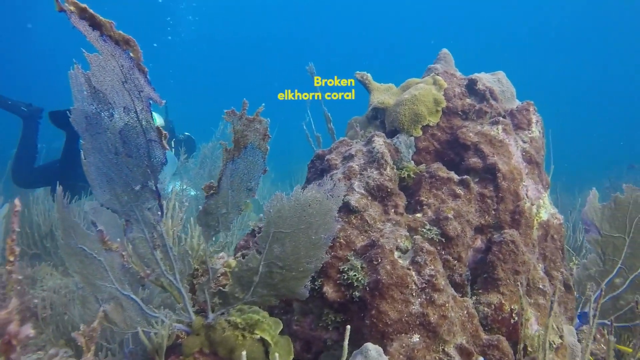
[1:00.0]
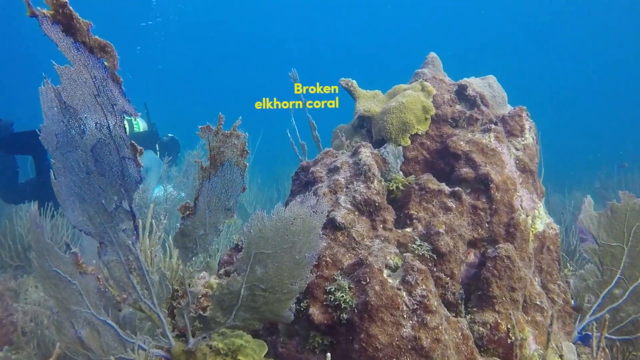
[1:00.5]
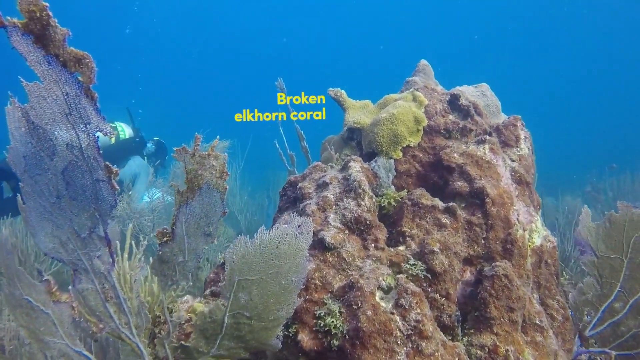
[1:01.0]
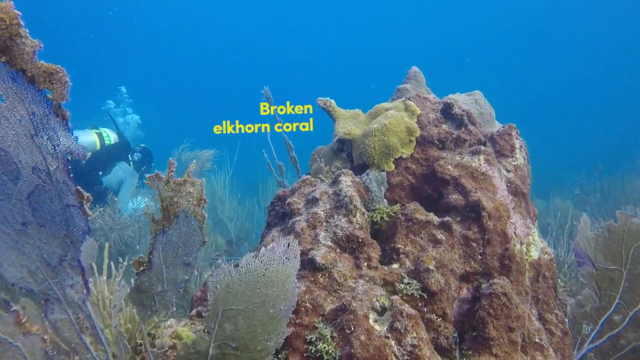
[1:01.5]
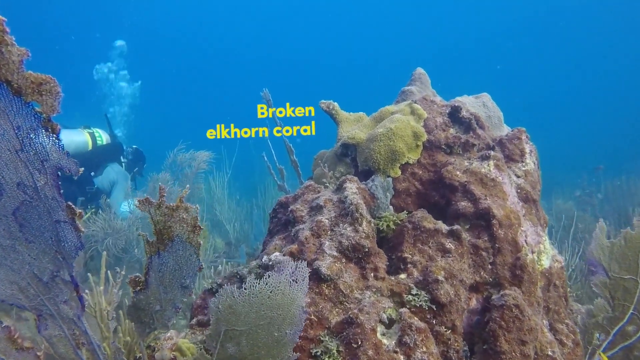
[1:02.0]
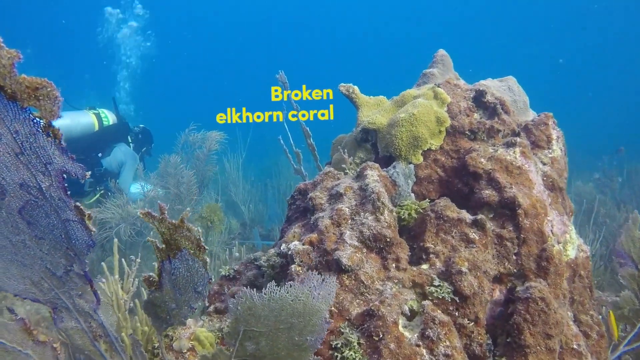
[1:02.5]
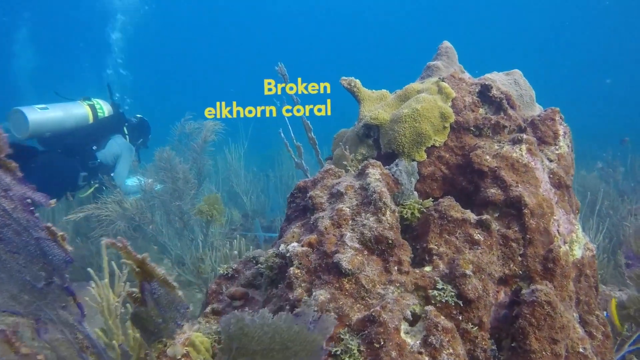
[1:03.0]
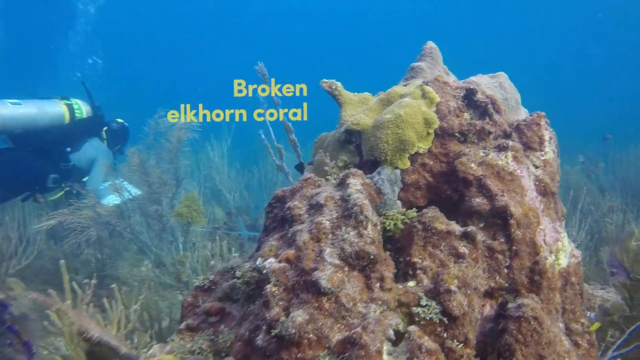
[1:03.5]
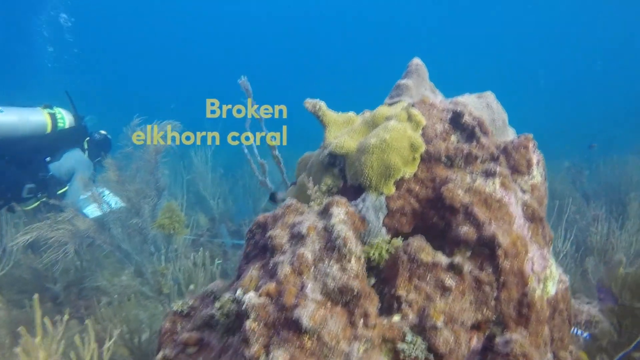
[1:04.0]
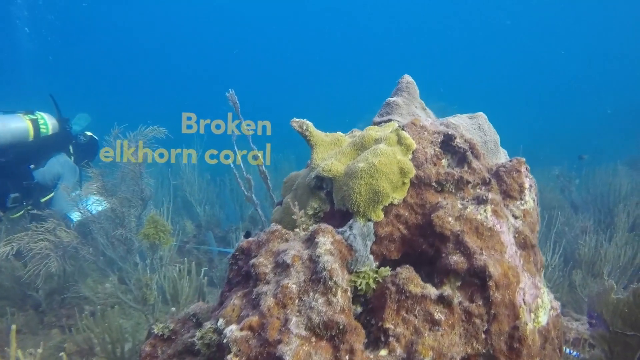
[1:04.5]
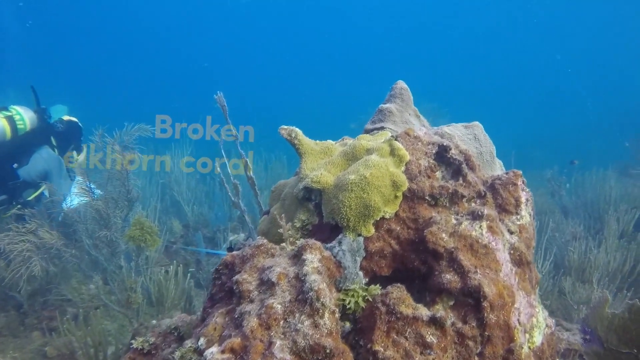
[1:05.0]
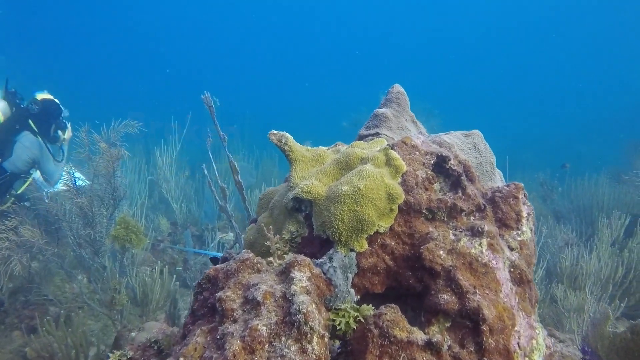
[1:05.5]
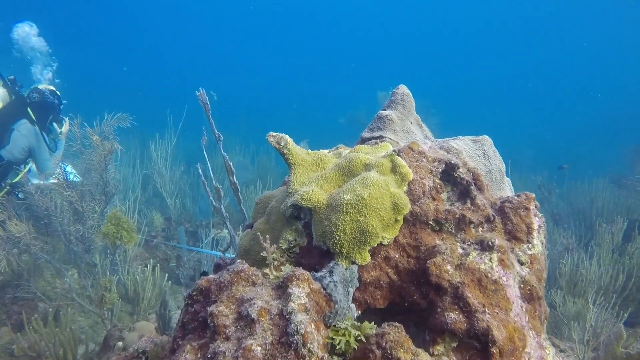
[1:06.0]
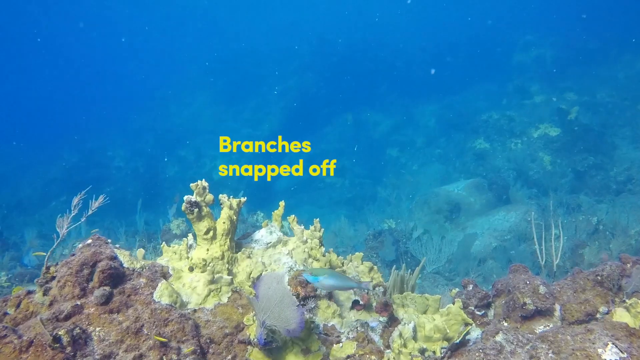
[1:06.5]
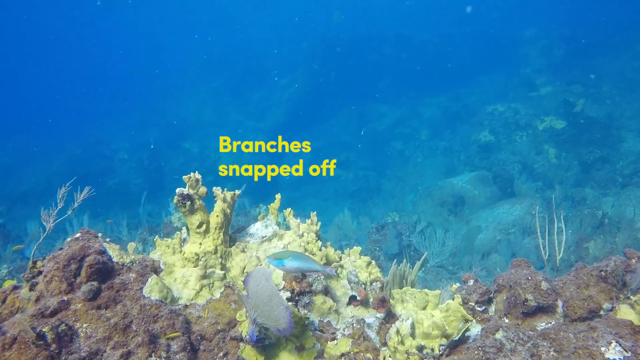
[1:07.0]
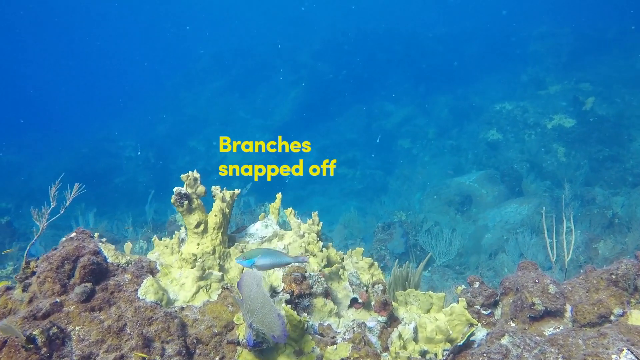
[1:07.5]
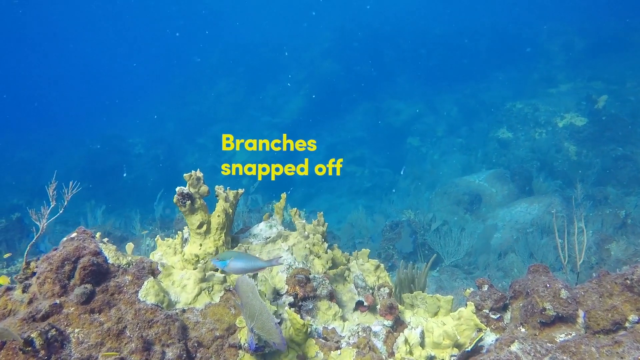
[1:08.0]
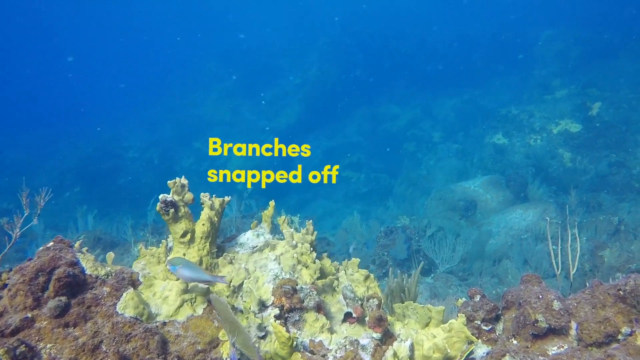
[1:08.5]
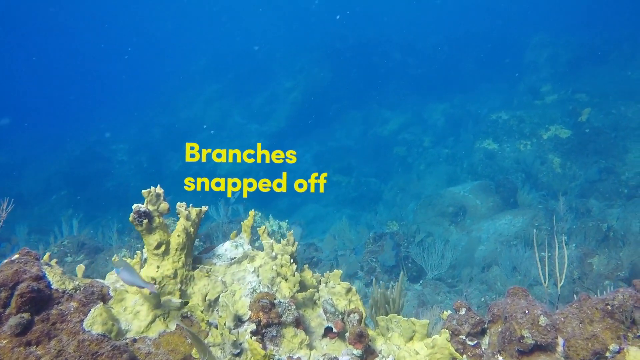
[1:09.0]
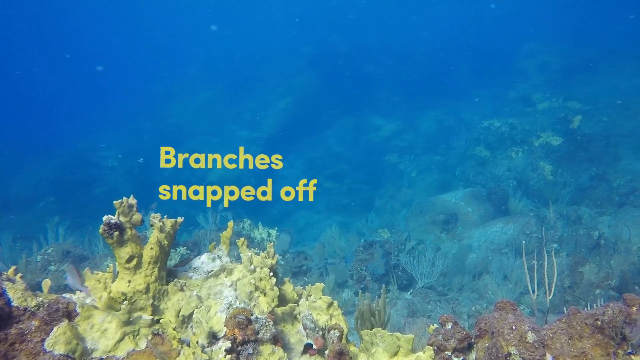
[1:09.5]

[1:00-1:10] The scene is a coast of Australia. Yellow text reads "branches snapped off" and "broken elkhorn coral" over a yellow coral with branches snapped off. After some time, the words fade out. There are a lot of grasses in the ocean. A swimmer passes by with an oxygen mask, and oxygen comes out of the mask.